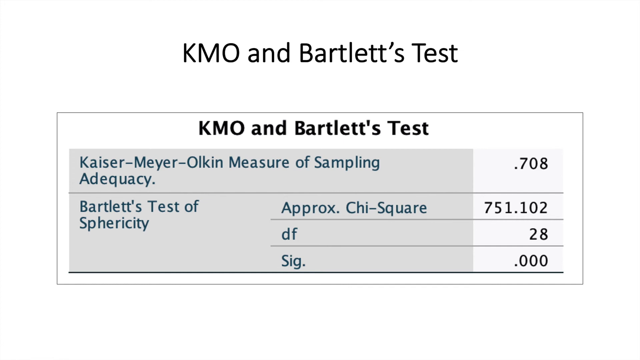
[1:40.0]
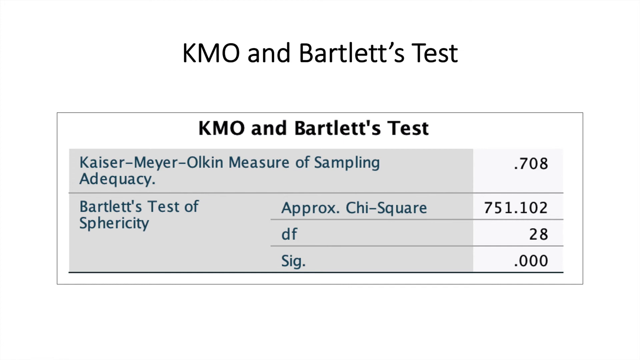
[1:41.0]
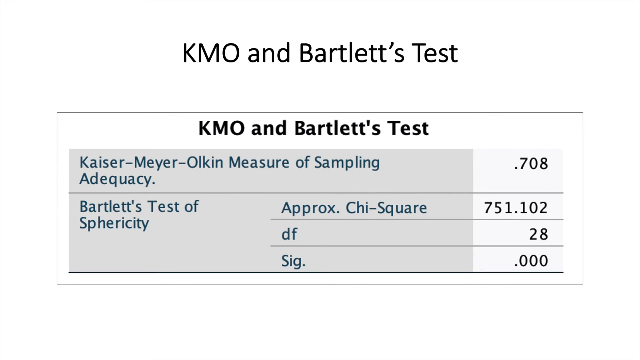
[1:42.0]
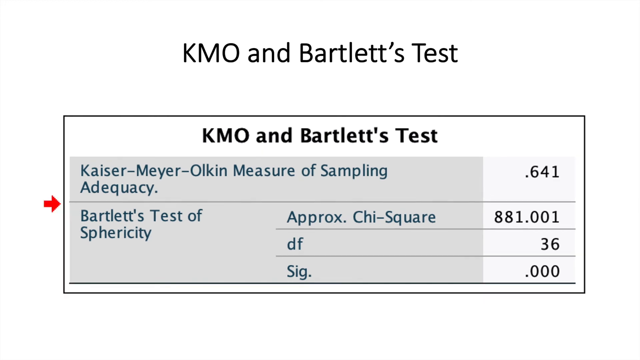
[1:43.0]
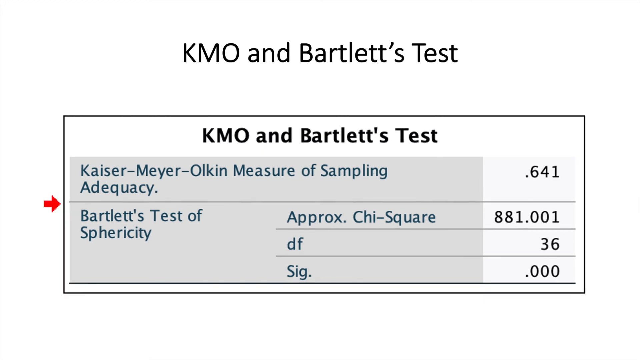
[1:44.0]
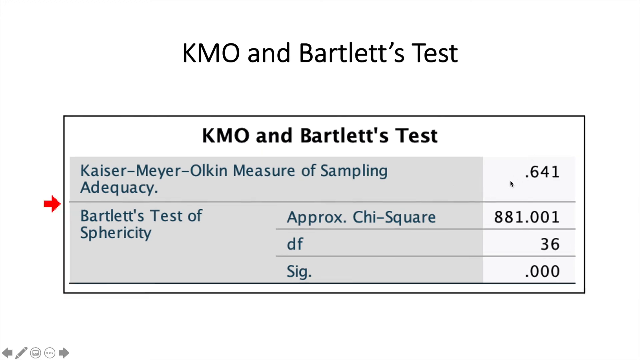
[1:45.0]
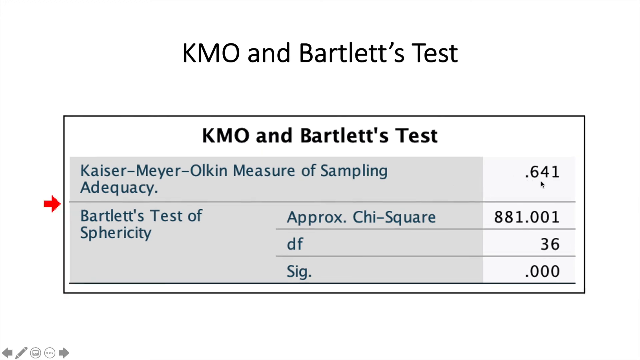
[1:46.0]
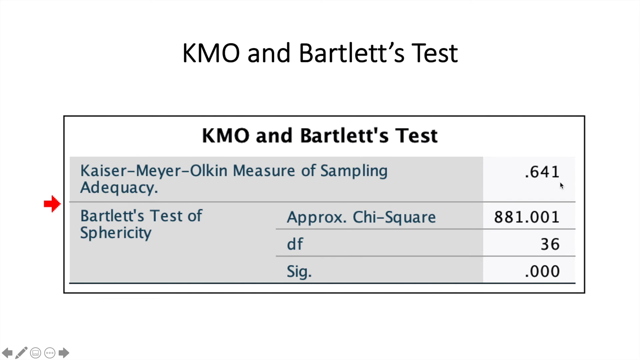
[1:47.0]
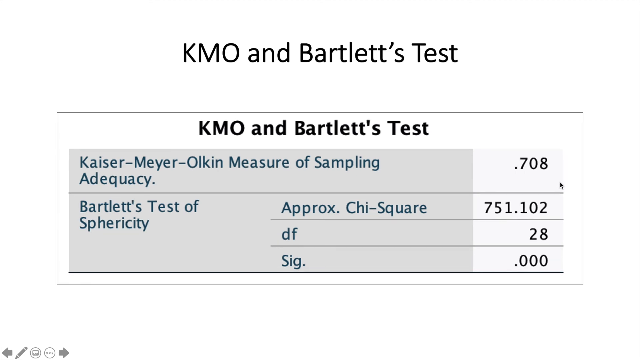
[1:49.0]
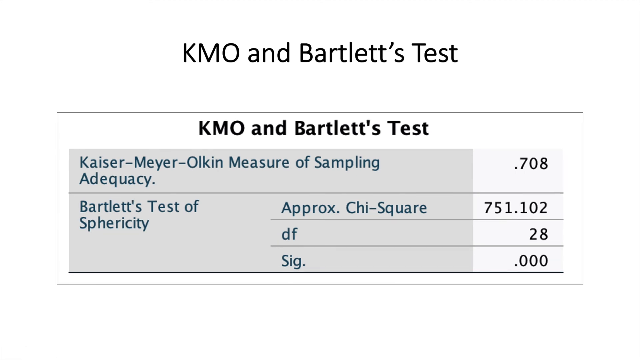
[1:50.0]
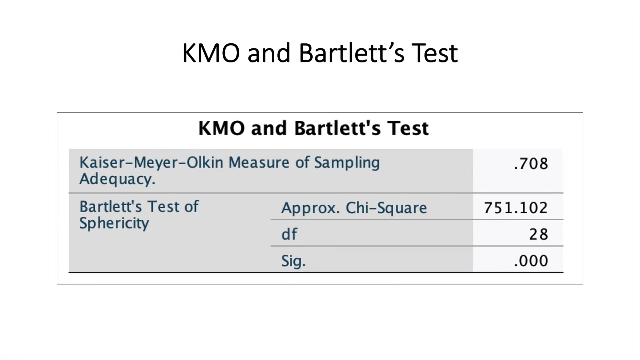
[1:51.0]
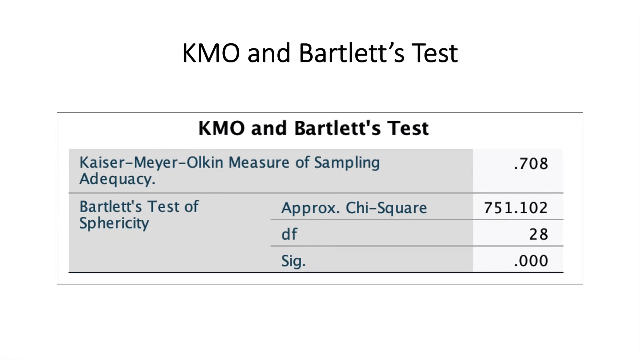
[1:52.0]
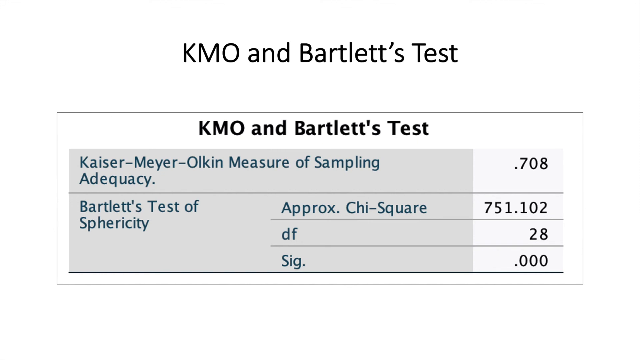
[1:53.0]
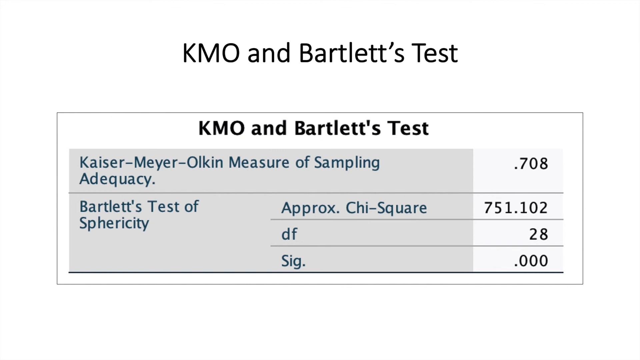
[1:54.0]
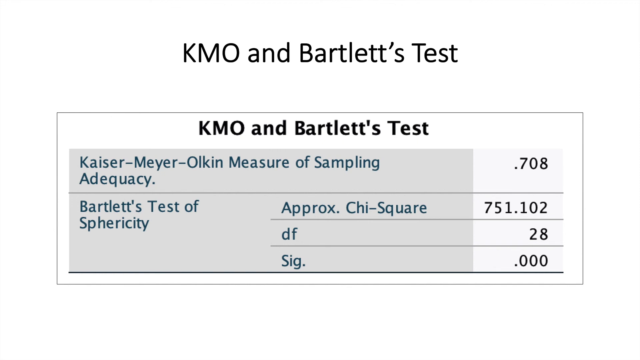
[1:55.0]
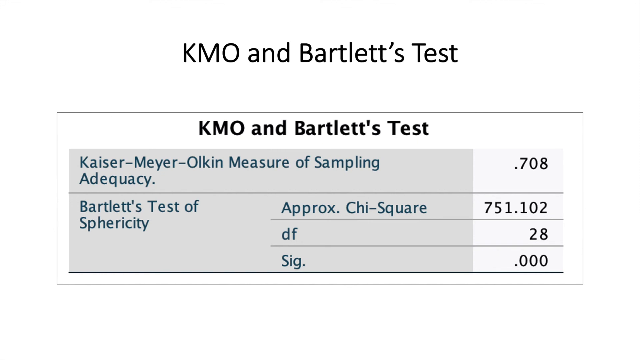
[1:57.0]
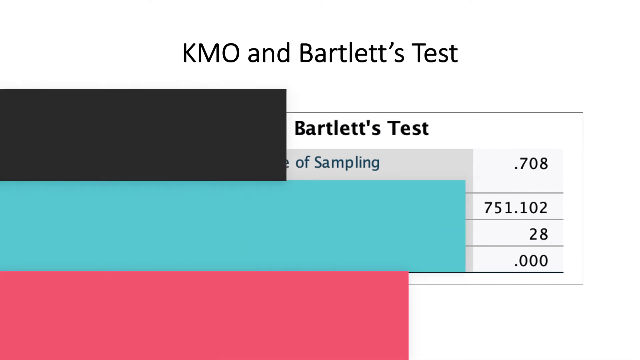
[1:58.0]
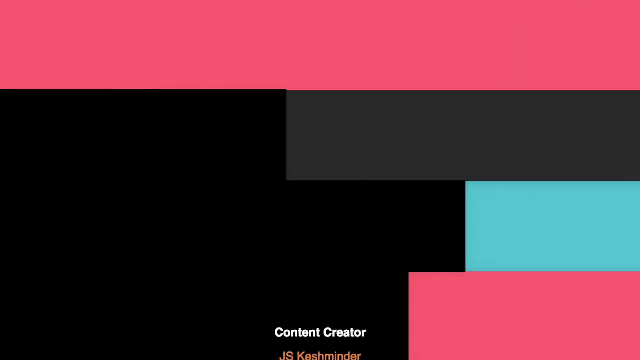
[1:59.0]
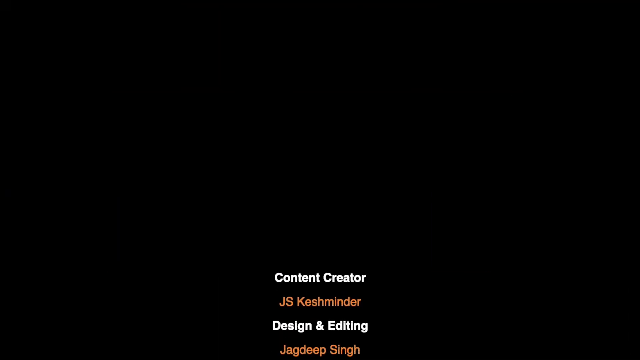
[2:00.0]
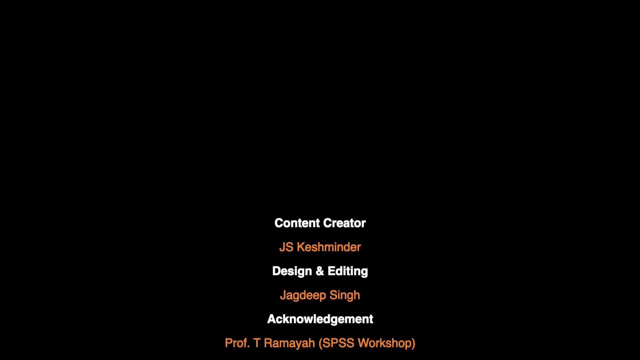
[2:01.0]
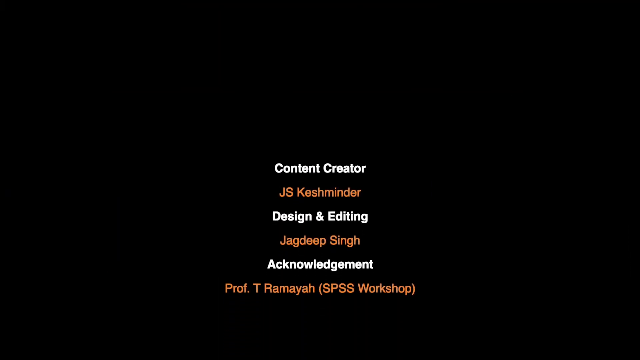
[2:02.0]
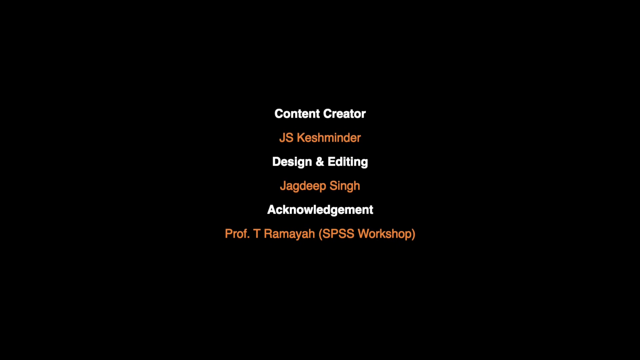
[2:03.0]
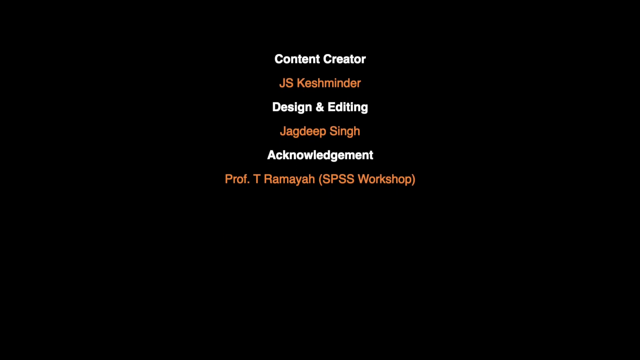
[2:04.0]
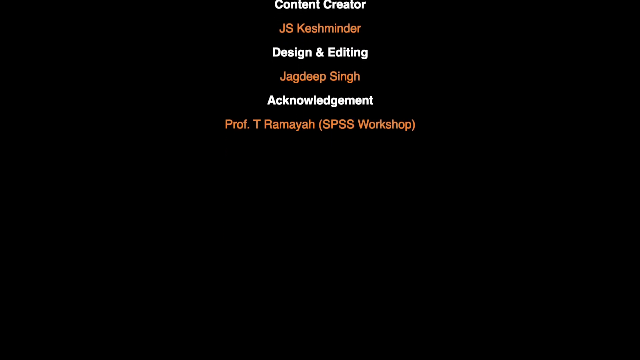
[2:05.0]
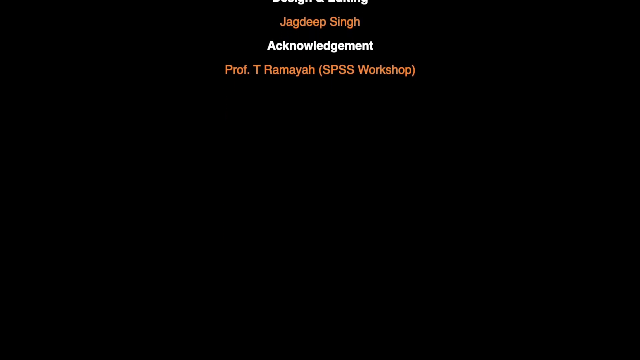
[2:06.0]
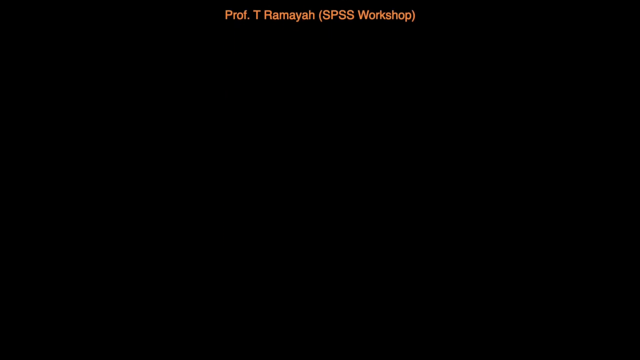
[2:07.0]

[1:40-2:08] A slideshow slide is titled "KMO and Bartlett's Test". Below the title is a small chart, also titled "KMO and Bartlett's Test" in bold, dark black font. Below that is a gray square containing a line about sampling adequacy and, below it, "Bartlett's Test of Sphericity". To the right of the first line is 0.708; below that are 0.751 and 0.102, then 0.28, then 0.002. To the left are the labels "approx chi-squared", "df" and "sig". A red arrow appears on the left side of the chart, pointing at the chart. The values are then updated in the next line. The scene then transitions to the credits on a black background, which show the content creator, editing, and the acknowledgement.